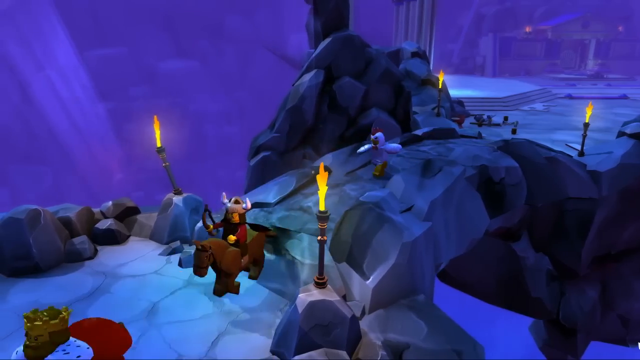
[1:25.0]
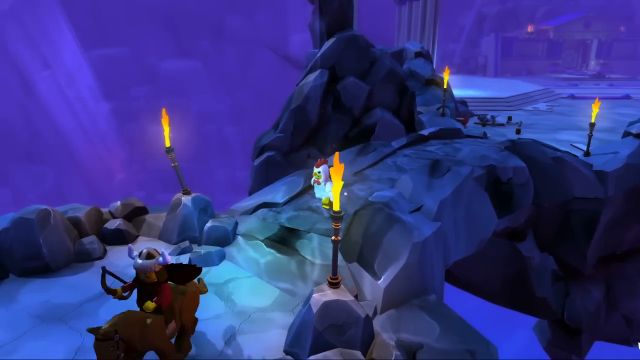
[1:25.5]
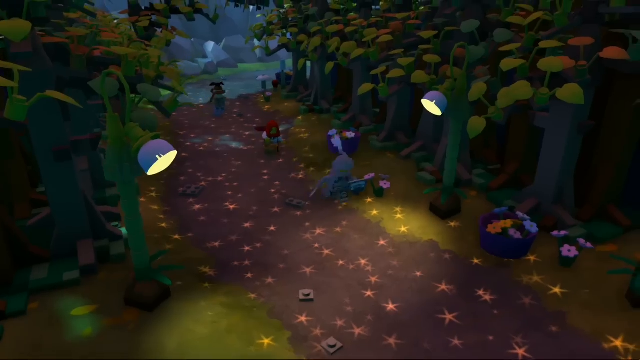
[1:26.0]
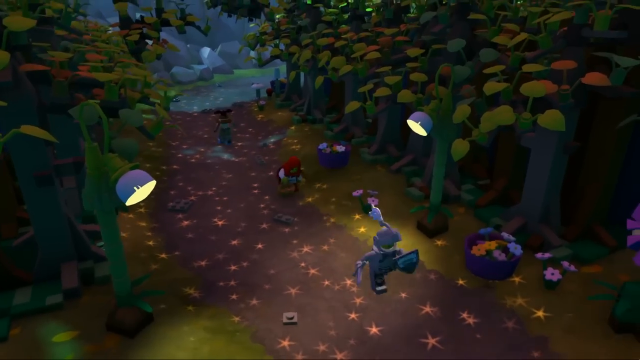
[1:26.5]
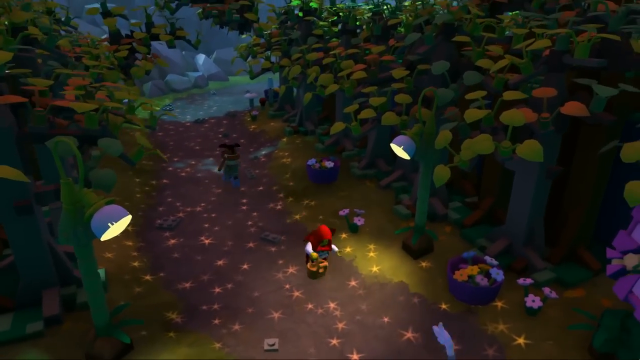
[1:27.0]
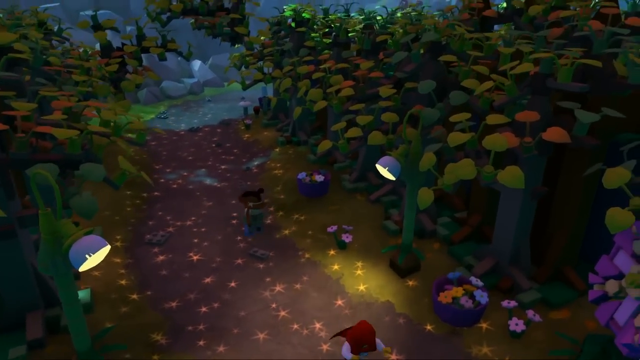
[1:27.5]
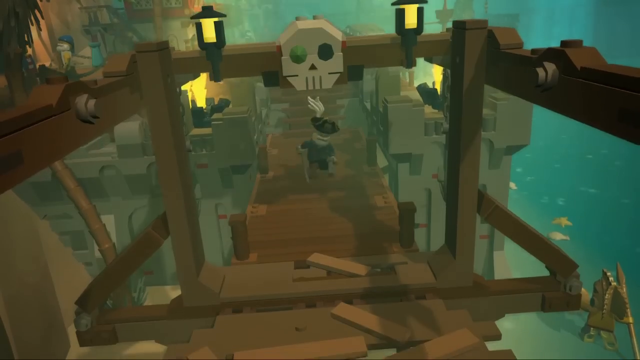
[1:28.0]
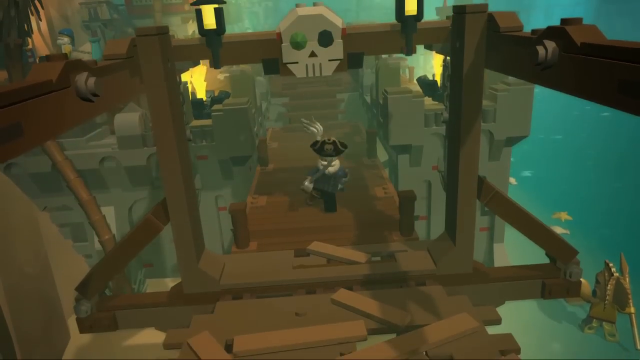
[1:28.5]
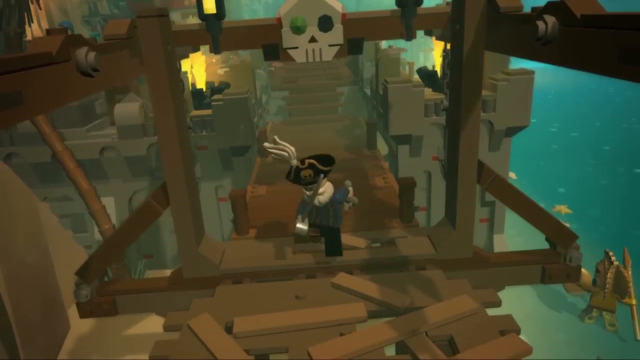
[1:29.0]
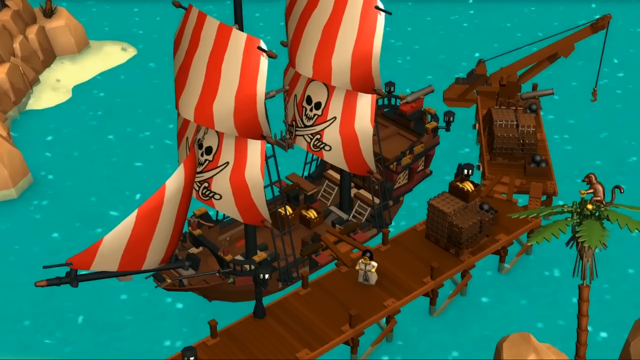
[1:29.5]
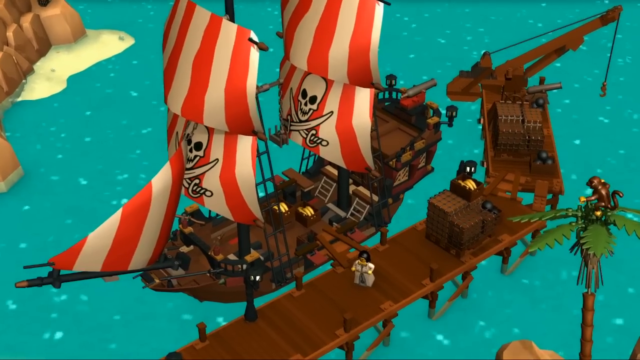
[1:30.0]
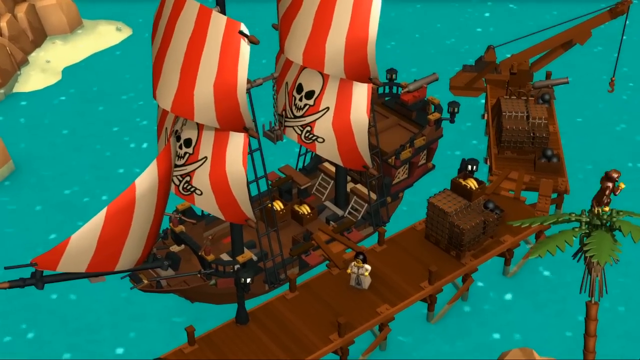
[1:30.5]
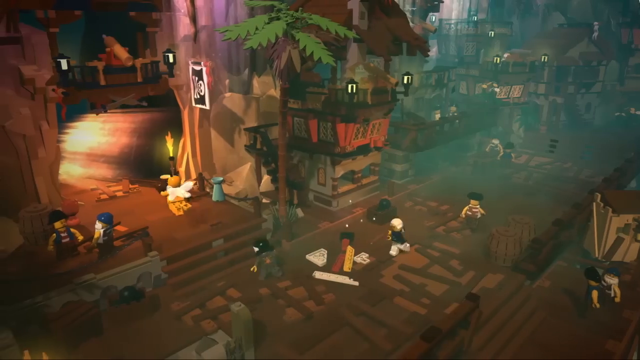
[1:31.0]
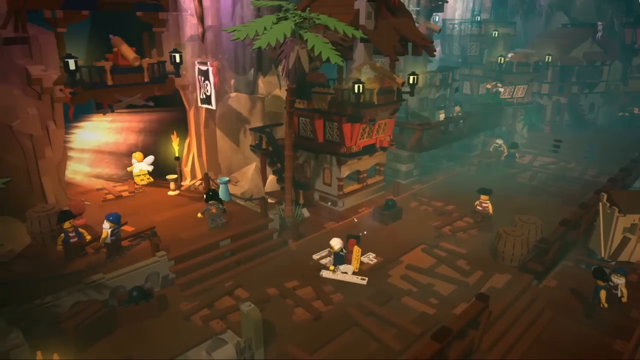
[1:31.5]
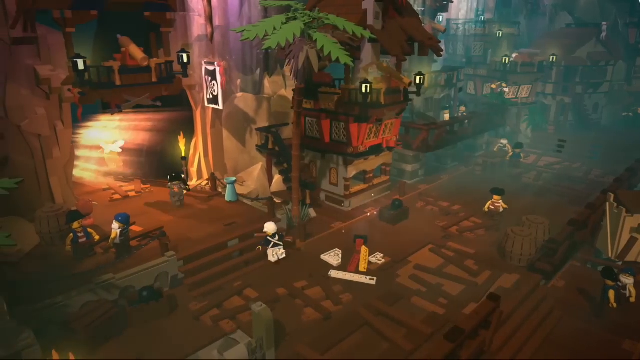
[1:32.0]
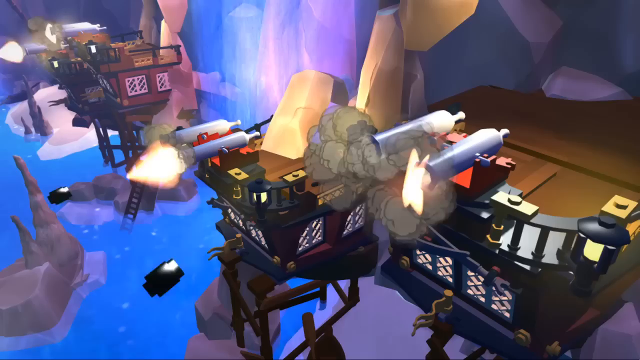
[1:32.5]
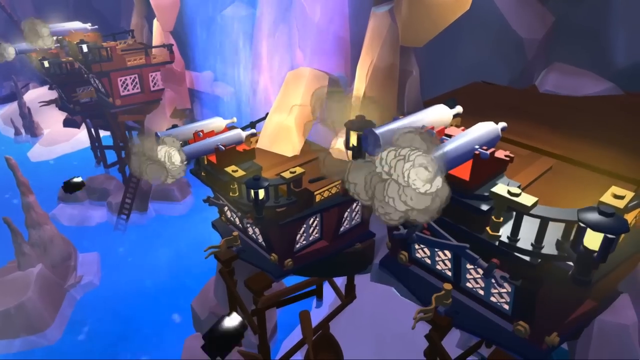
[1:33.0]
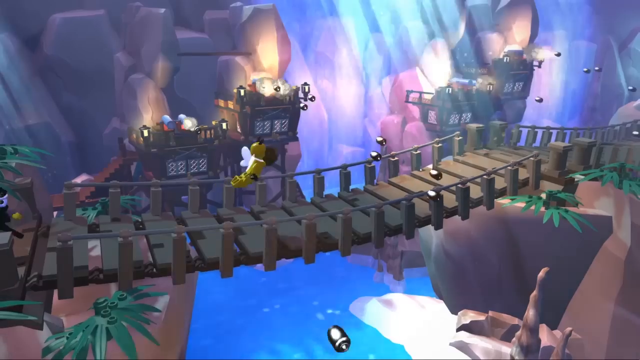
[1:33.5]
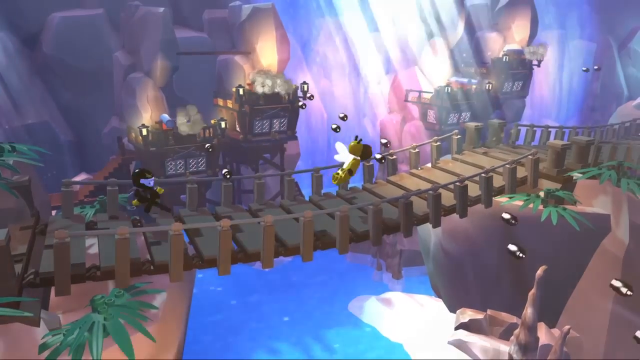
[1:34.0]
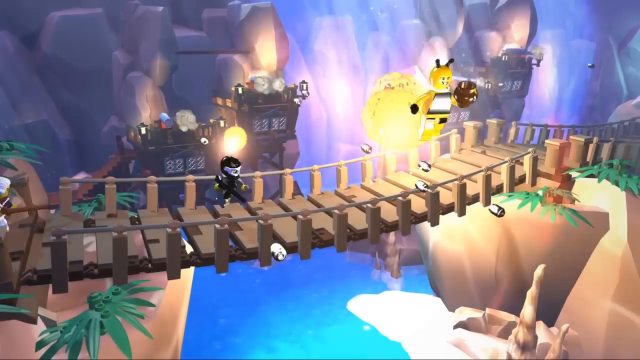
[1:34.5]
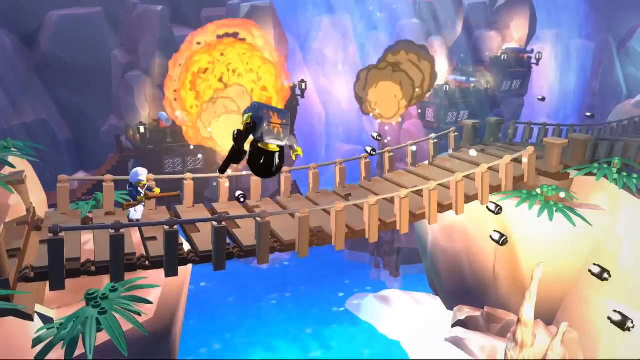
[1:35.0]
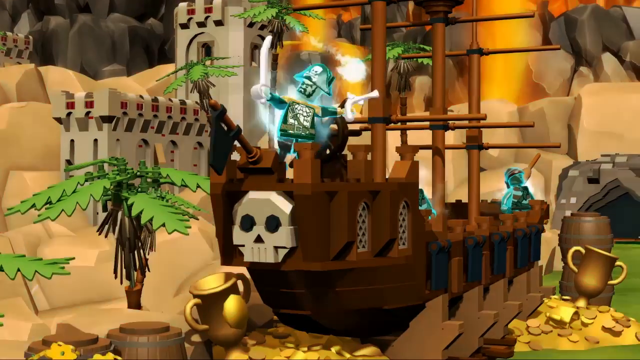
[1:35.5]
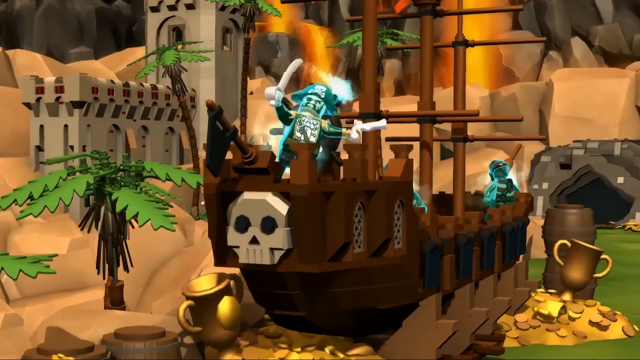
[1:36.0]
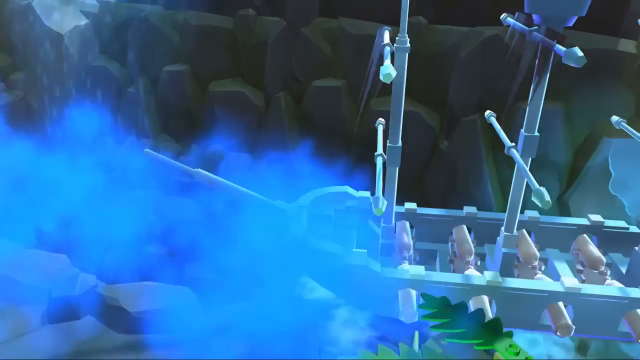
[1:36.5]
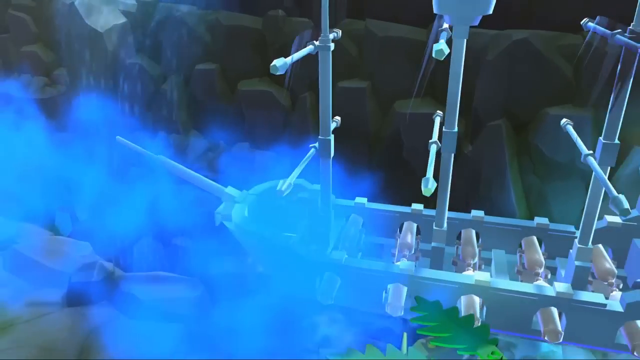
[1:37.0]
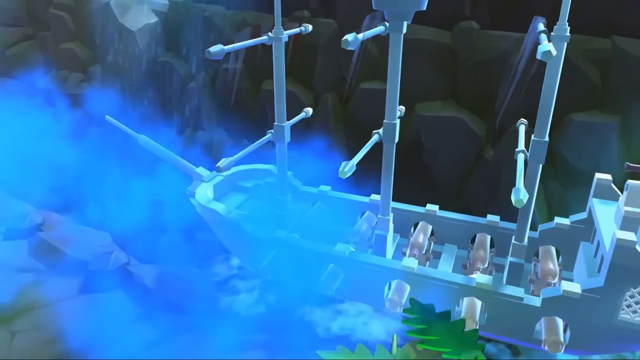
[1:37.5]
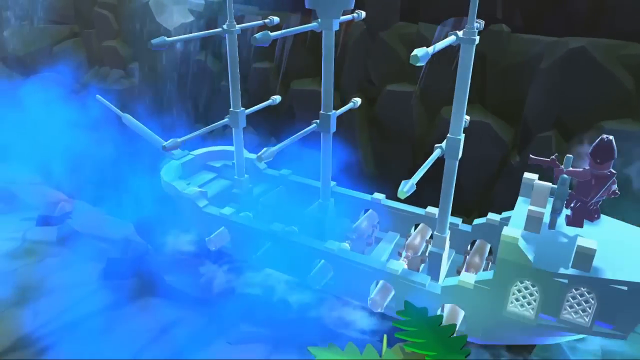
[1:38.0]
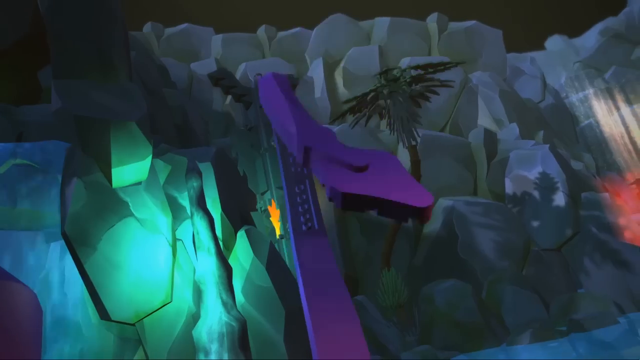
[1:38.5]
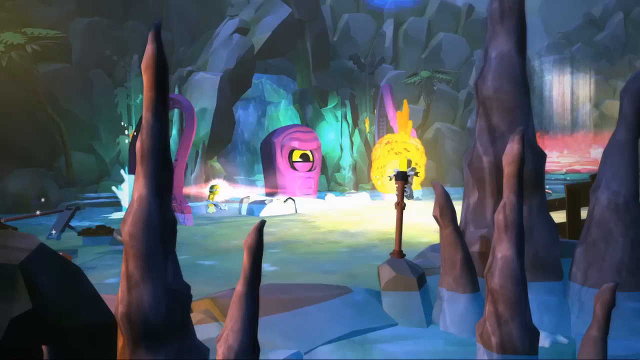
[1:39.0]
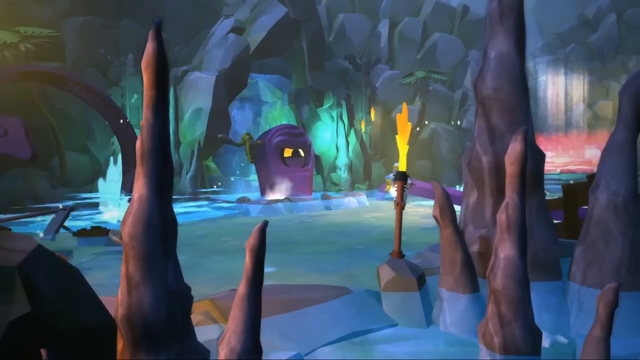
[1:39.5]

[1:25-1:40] A new setting is outside but sort of dark, illuminated by two plant-shaped lights, with lots of green trees, multicolored flowers and orange stars on the ground; three characters run in line. Next is a pirate-looking setting with a sort of daunting bridge over the ocean, a white skull on top of the bridge, and a man in a pirate hat with two swords running. A larger view shows a different pirate ship with two giant flags with red and white stripes and a white skull, a monkey sitting on top of a palm tree, and a dock; the boat and dock are both brown. A different setting seems to be some sort of central city with lots of different characters, dark and lit by gas lamps and fire. Then what seems to be the edge of a boat appears, with cannons shooting things. A bridge with a purple background follows, with someone dressed like a bumblebee flying. On another pirate ship, a different pirate with a turquoise glow is dancing. The scenes move very rapidly. A large ship moves through the water and fog. Finally, what at first looks like an enormous purple snake turns out to be a single tentacle of an enormous purple octopus in a cove.